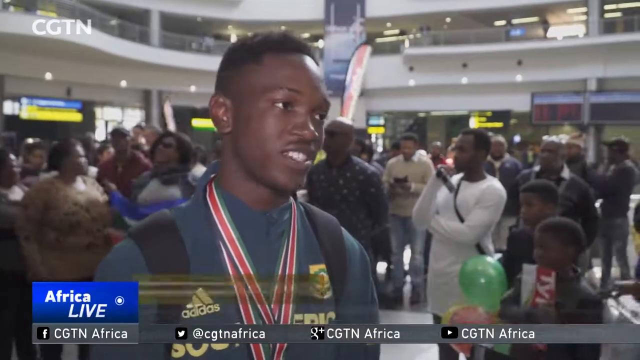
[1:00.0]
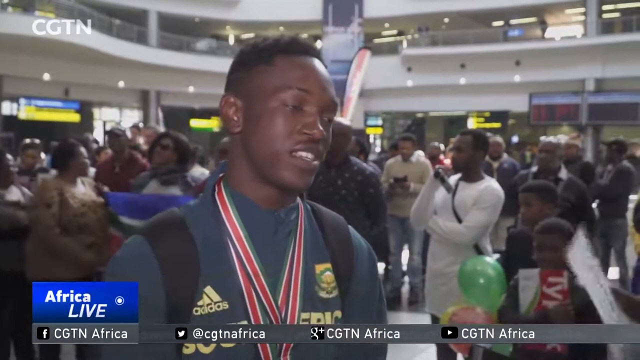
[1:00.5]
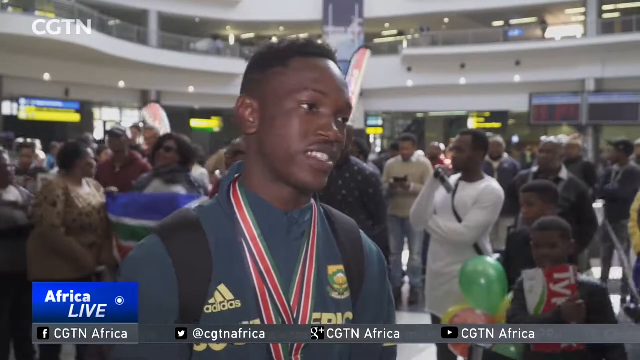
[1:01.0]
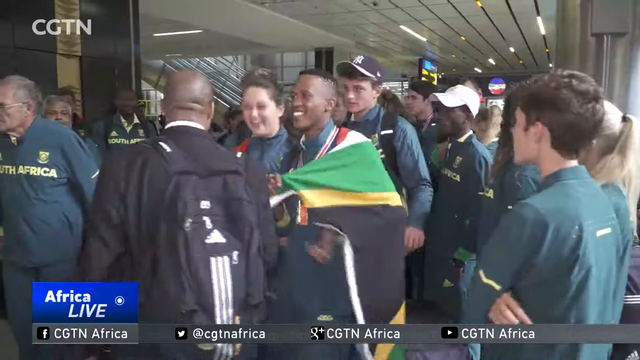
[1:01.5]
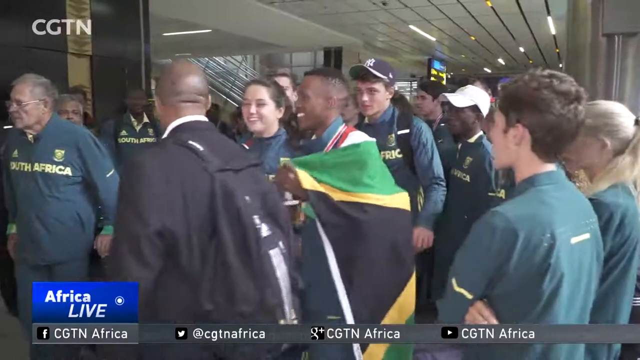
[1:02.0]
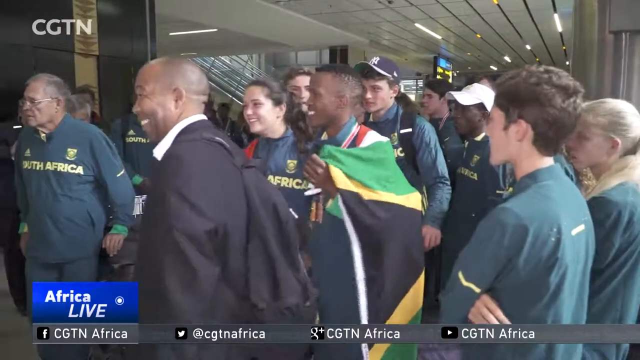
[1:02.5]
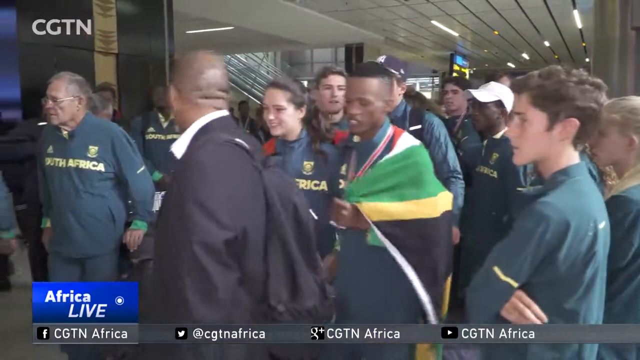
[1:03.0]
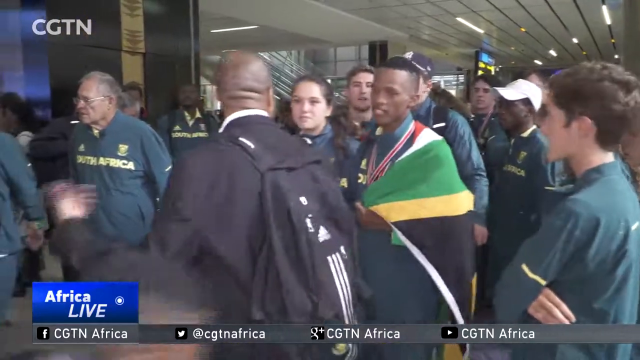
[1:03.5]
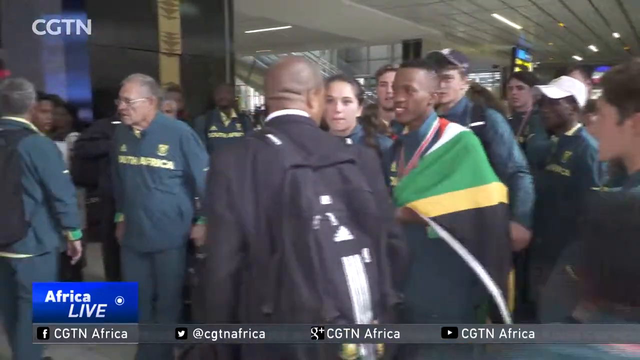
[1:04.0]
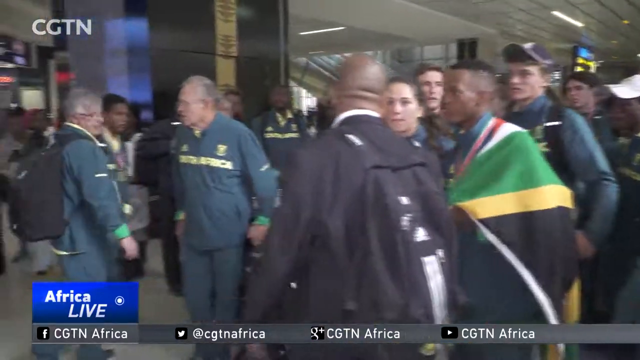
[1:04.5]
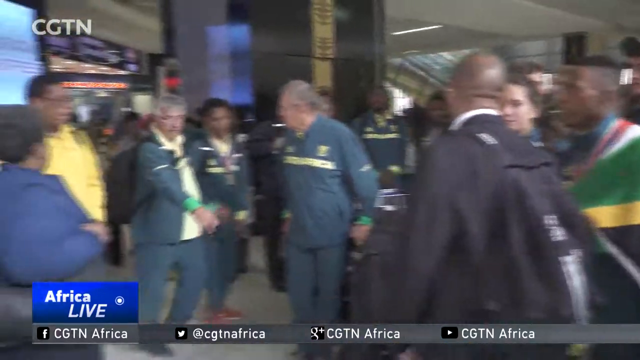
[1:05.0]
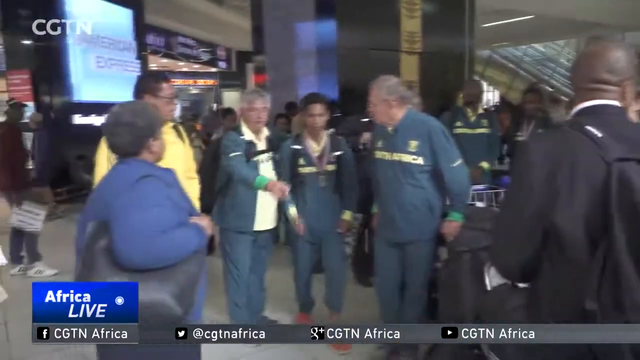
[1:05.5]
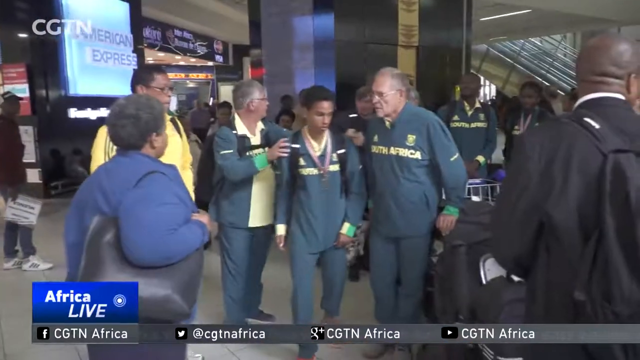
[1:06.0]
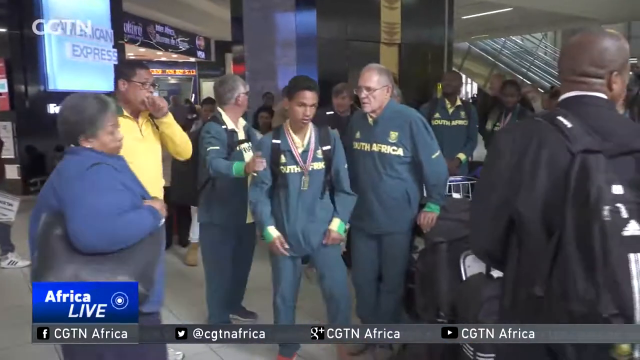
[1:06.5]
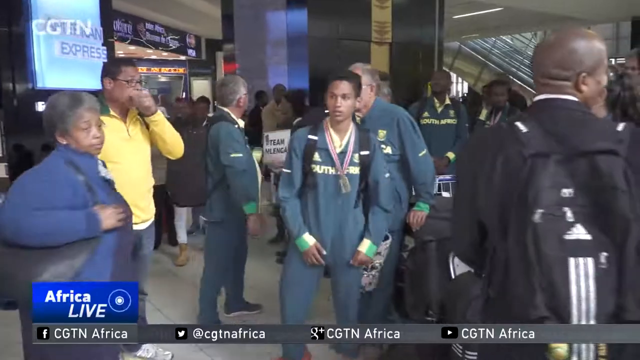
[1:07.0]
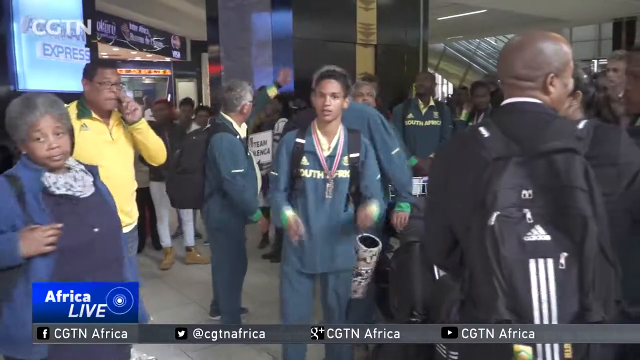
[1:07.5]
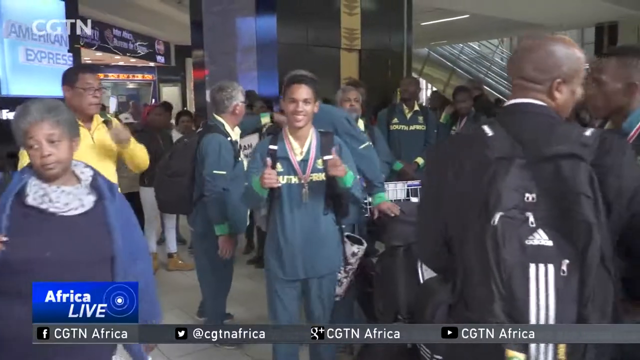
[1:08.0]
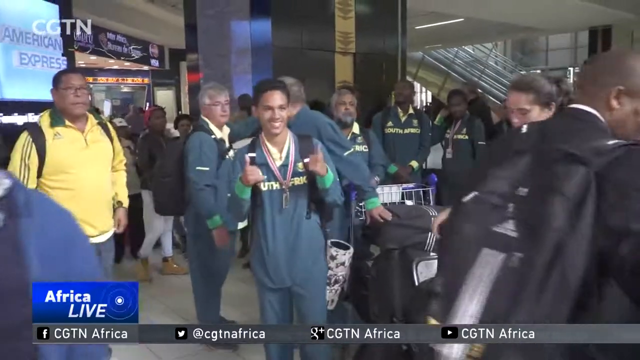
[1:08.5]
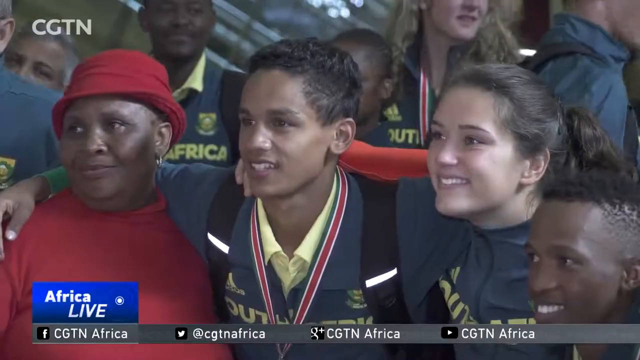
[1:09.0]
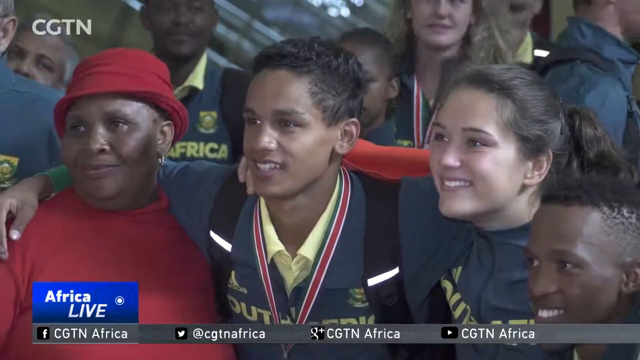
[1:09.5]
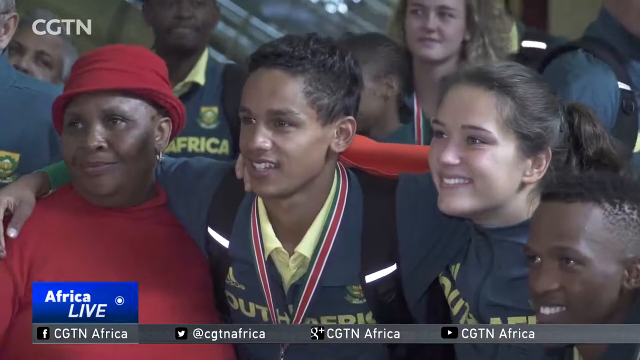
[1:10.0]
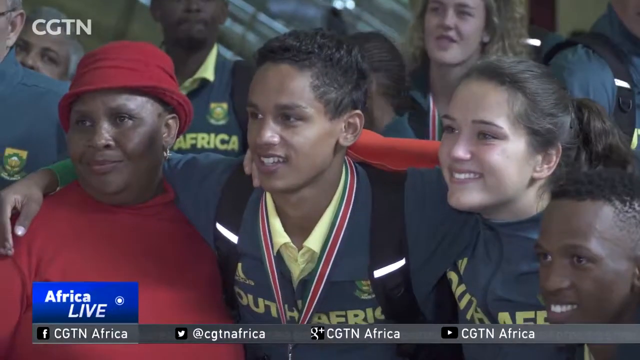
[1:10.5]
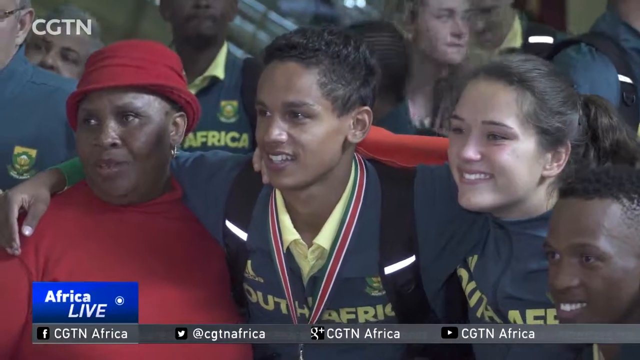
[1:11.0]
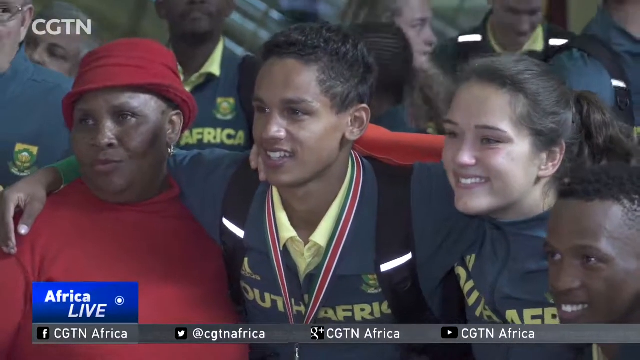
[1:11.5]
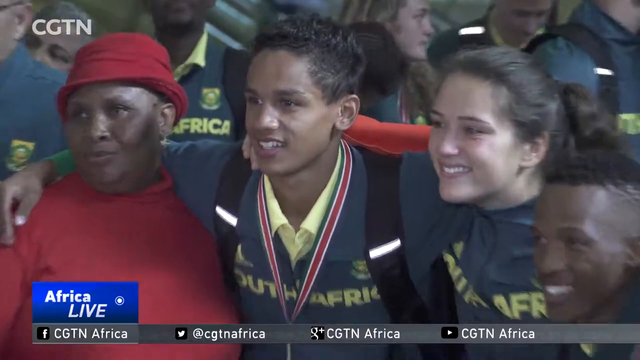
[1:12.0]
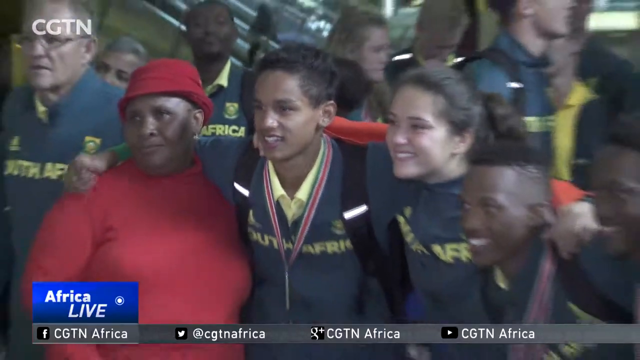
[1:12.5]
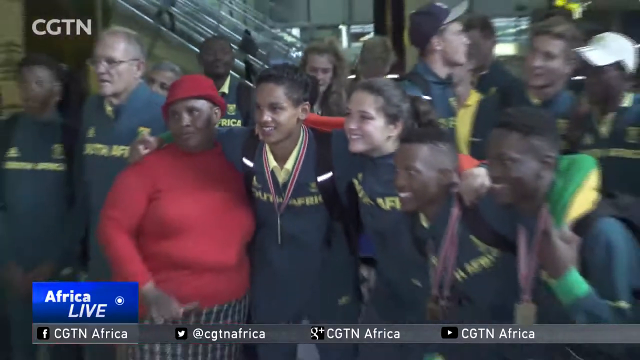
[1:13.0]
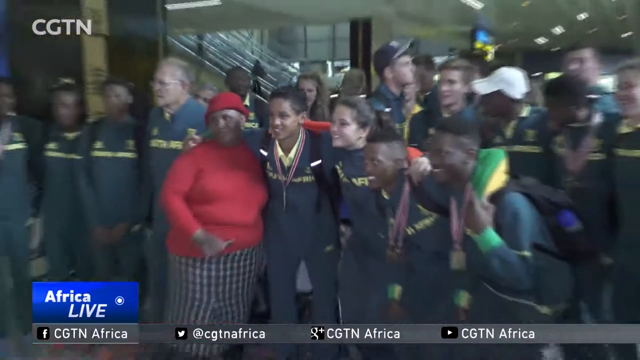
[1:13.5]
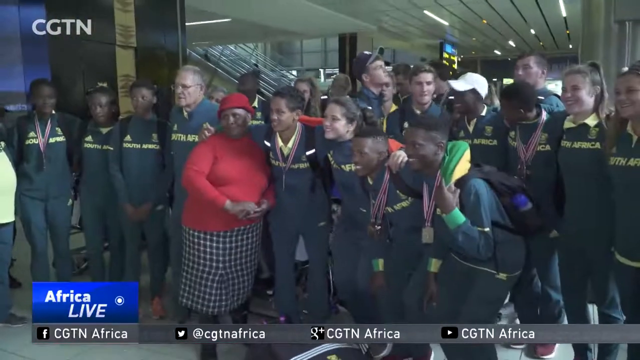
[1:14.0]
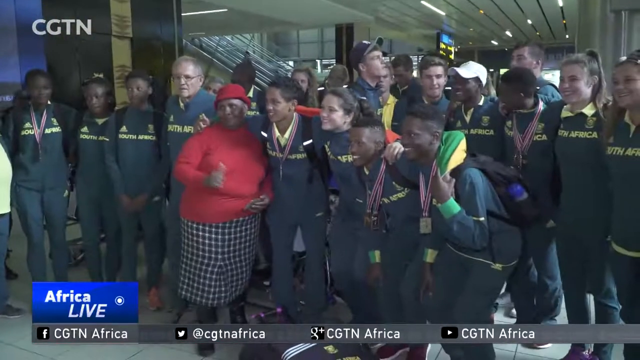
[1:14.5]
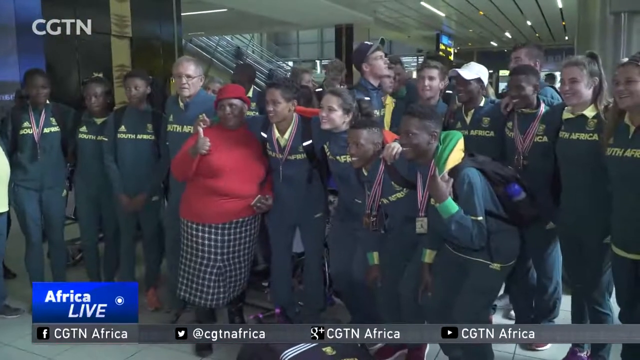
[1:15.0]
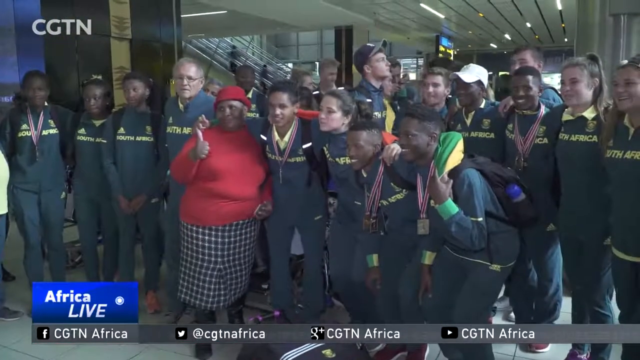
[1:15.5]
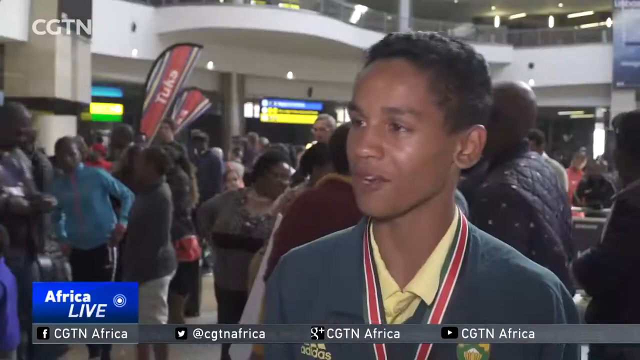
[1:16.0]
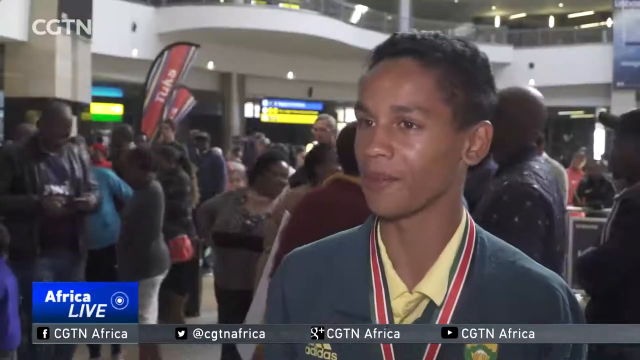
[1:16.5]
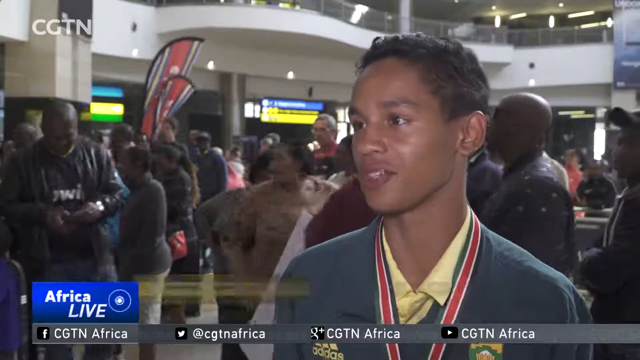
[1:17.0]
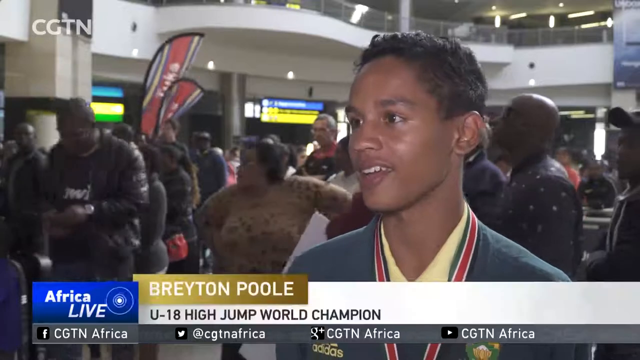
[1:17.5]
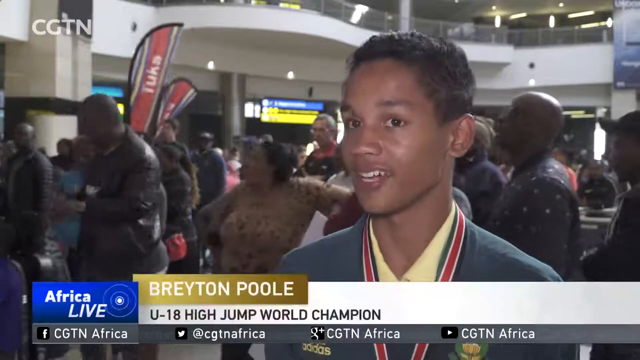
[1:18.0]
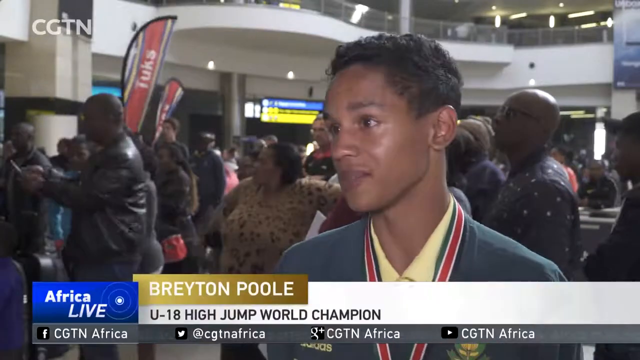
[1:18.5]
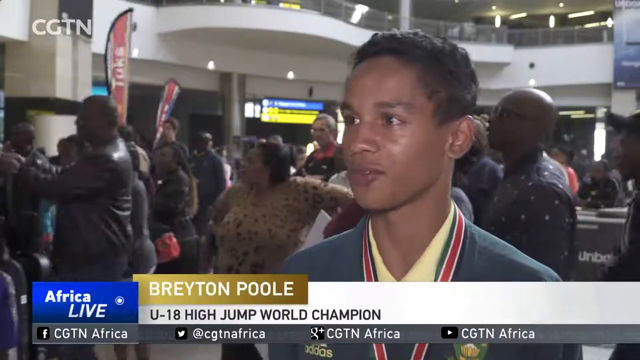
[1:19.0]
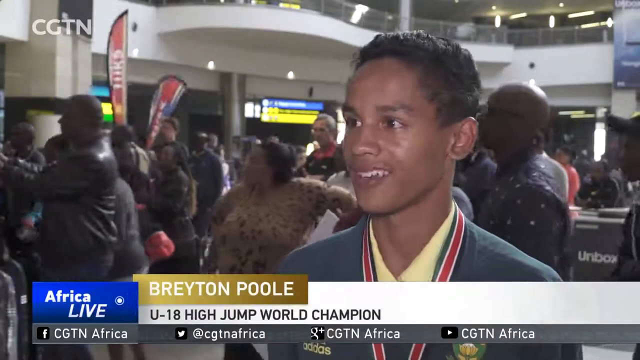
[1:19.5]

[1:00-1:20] A handsome young male athlete, looking maybe 20 years old, with short hair, is interviewed wearing what looks like two, possibly three, medals around his neck. The video then cuts to a man who appears to be the president of South Africa, or perhaps of the athletics team, shaking hands with the other athletes; he wears a black backpack as he spins around to shake the hands of the winners coming home. The camera pans to the left, showing more athletes walking through and noticing the cameras on them. One young man smiles and gives a thumbs up, wearing a medal around his neck. The video then cuts to him surrounded by others, arms around each other, smiling at the cameras. His name pops up: "Breyton Poole," "High Jump World Champion."